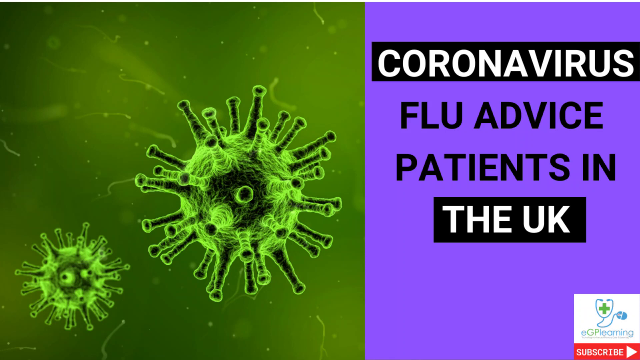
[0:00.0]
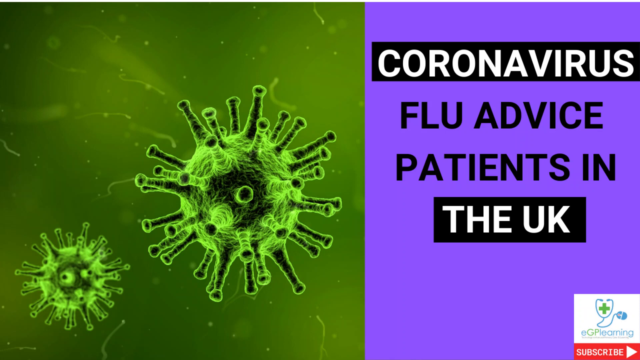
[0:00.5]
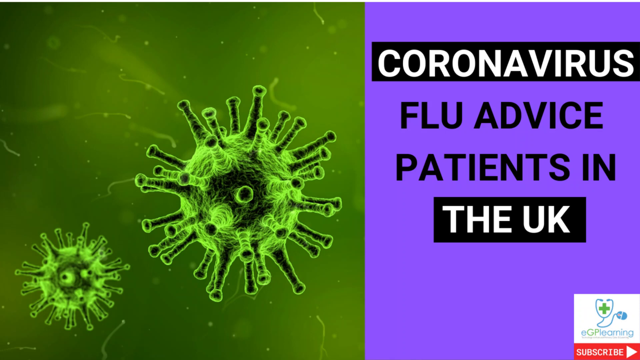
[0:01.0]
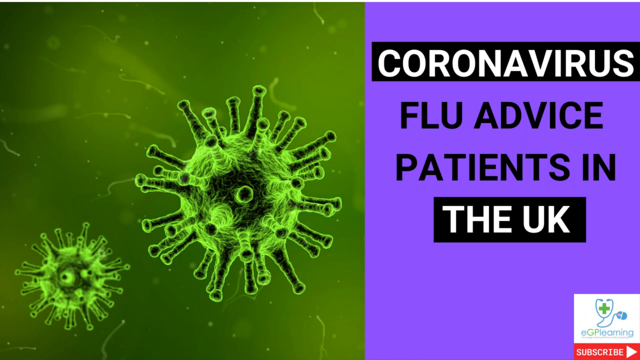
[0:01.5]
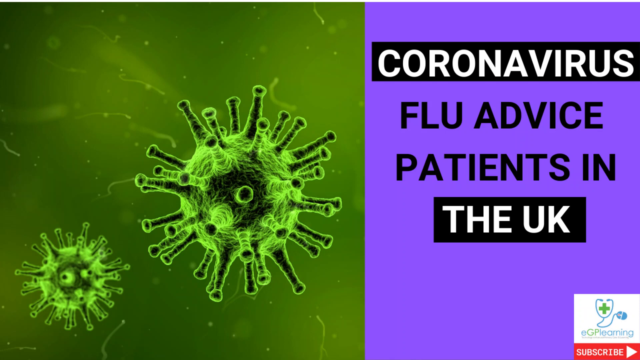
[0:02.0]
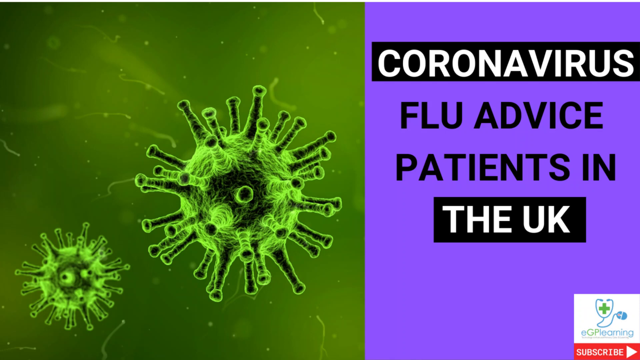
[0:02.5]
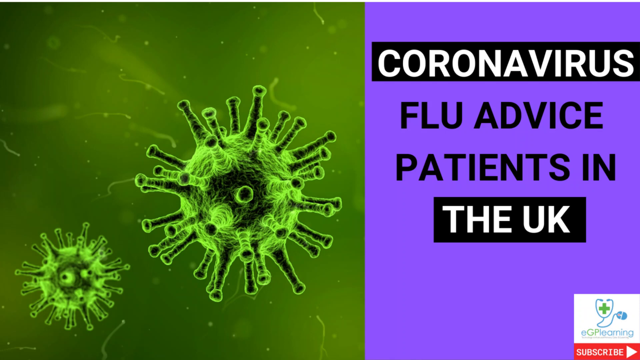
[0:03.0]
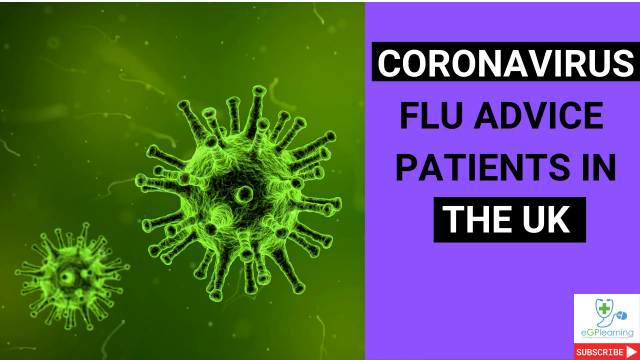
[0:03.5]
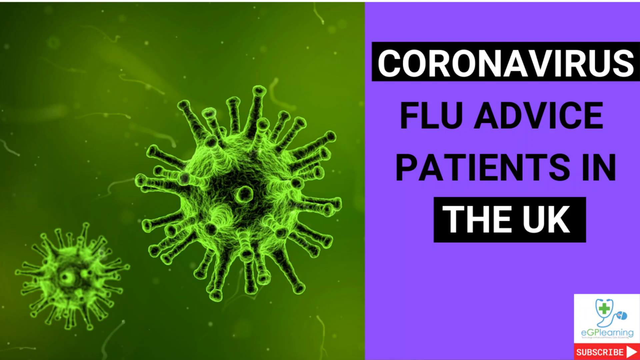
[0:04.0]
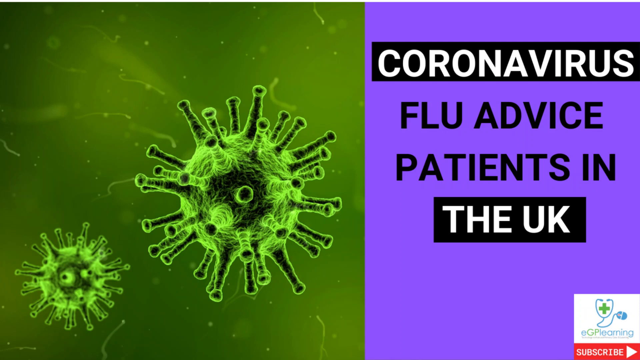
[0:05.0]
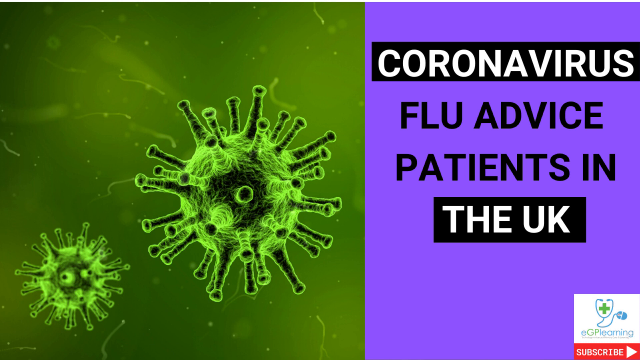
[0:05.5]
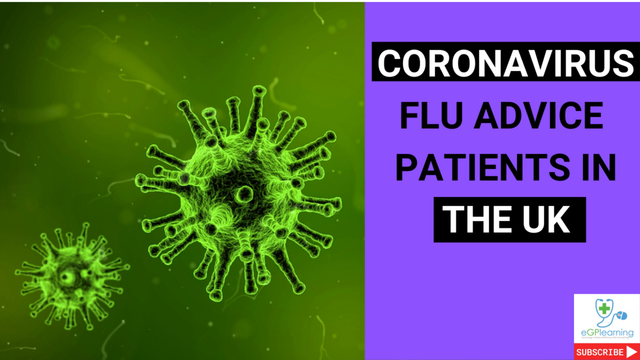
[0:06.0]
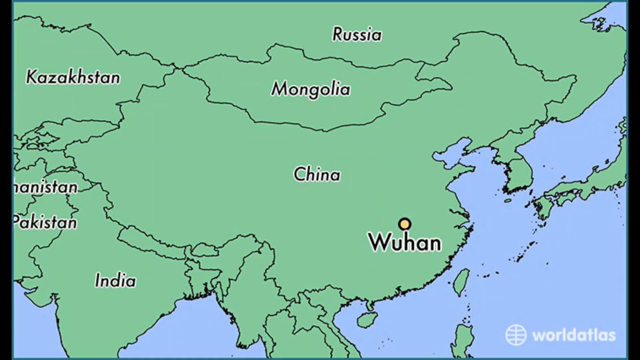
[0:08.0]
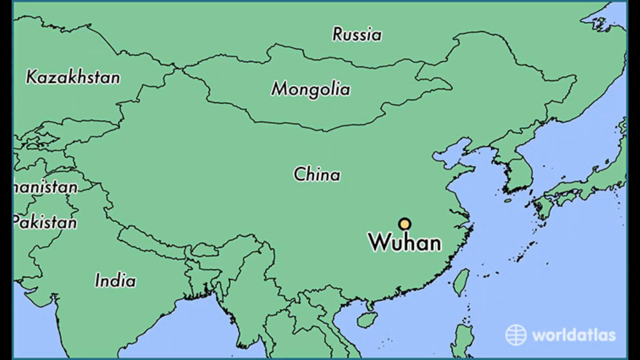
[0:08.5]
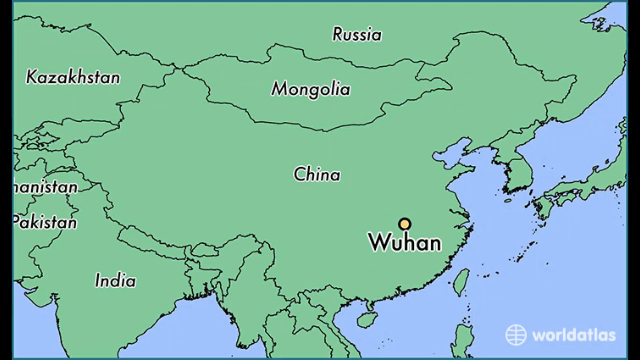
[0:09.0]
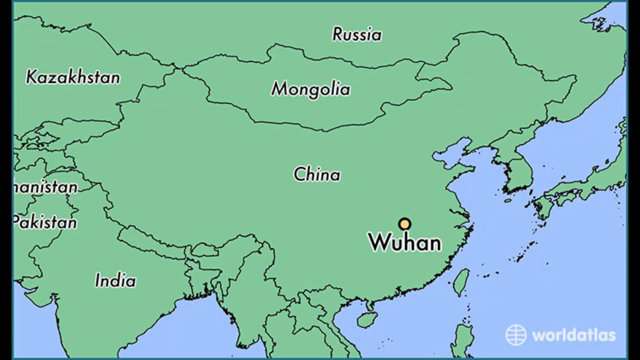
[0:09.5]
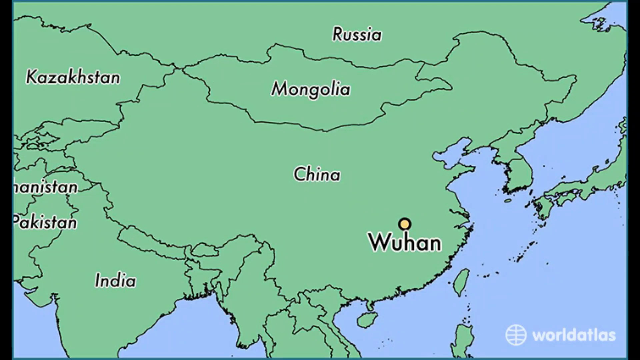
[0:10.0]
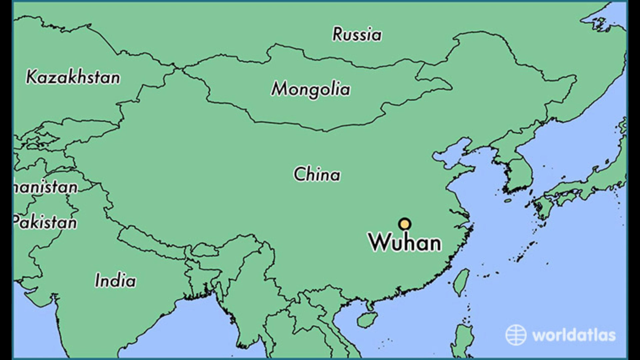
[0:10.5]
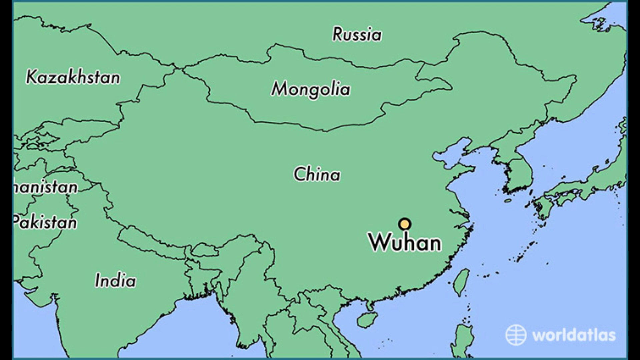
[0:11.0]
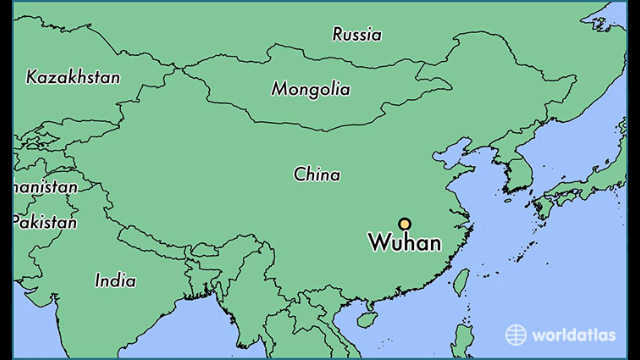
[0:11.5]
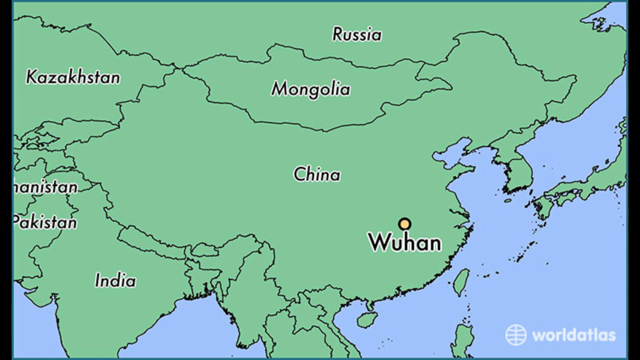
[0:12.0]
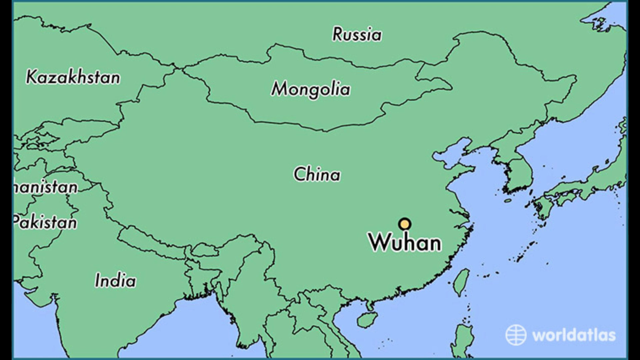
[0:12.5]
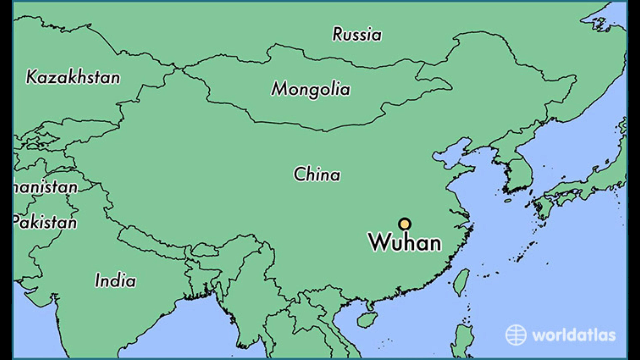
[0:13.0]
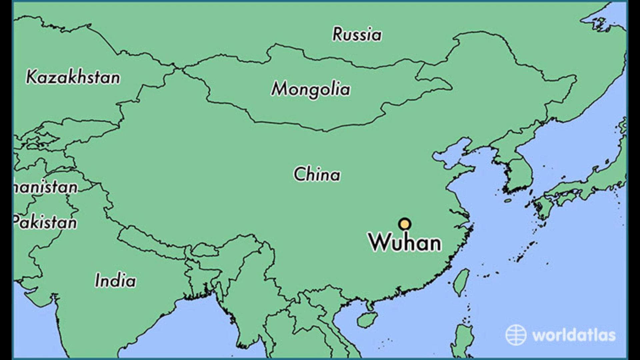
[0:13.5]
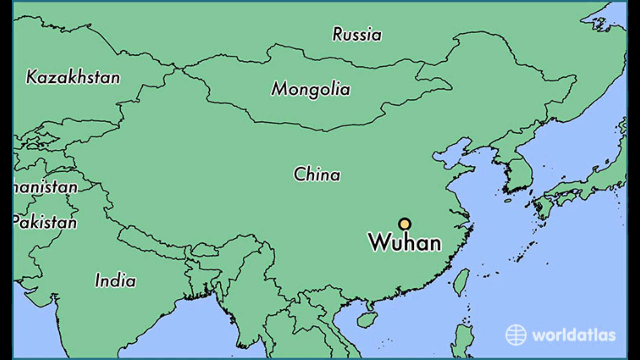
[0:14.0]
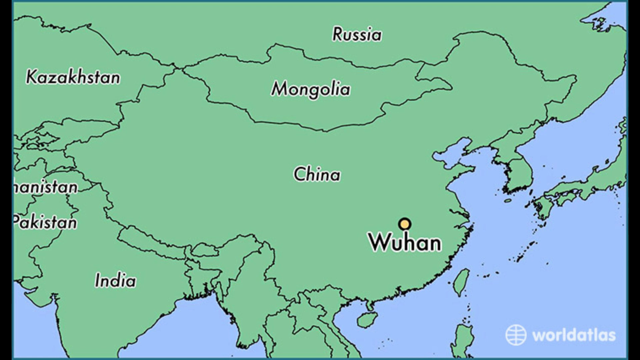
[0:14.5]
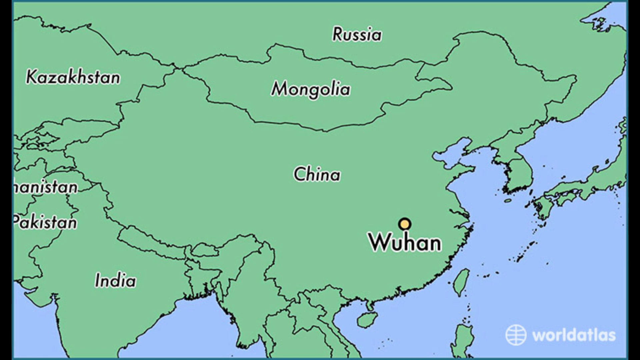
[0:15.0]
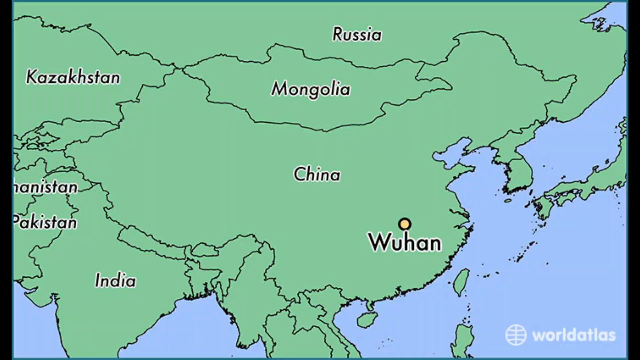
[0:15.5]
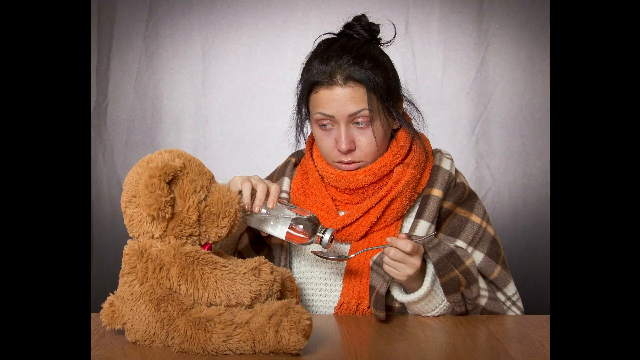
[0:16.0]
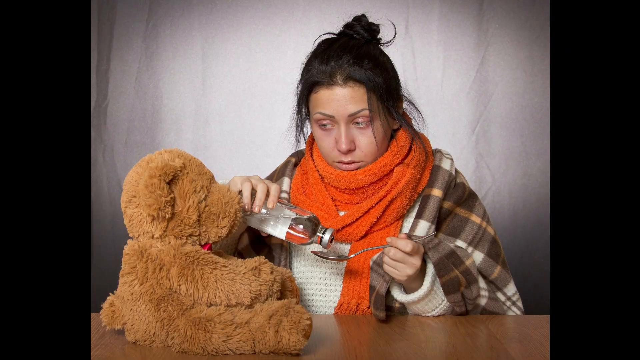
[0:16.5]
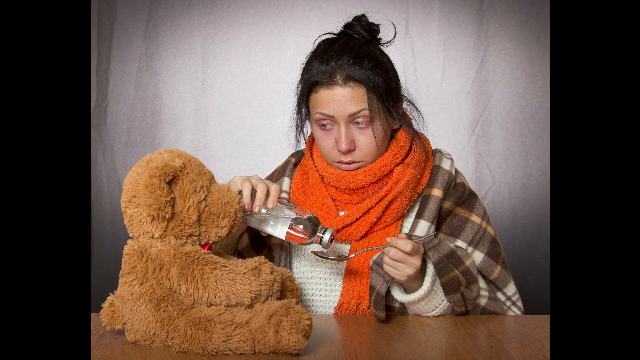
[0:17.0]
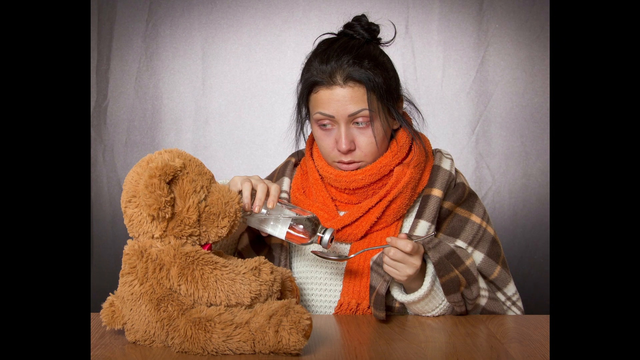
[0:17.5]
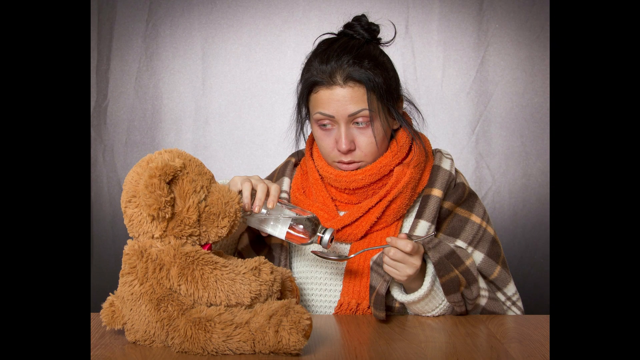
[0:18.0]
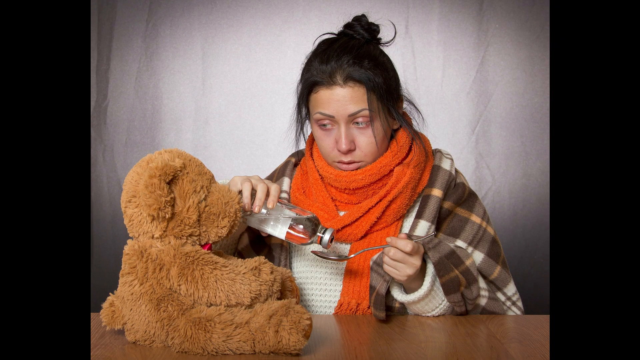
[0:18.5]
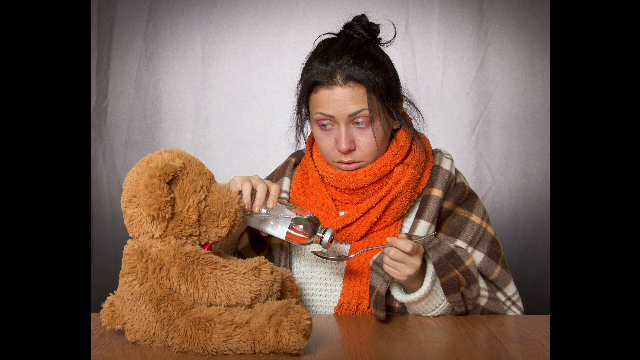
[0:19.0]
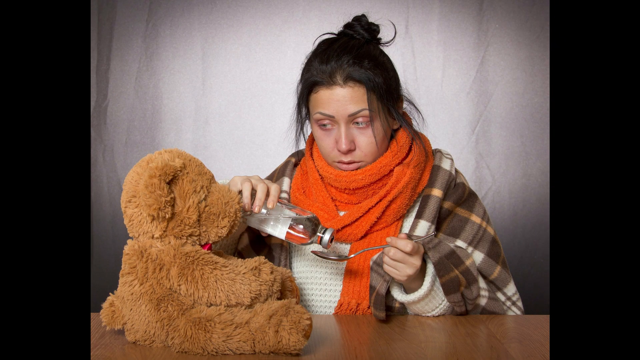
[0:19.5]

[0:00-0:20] A slide about the coronavirus appears, with text that includes "coronavirus" and "patients in the UK." Two green spores are shown on a green background, one really big and one really small, the spore kind of just sitting there. A map follows, showing Russia, Mongolia, Kazakhstan, China, India, Pakistan, and Wuhan, with a circle right above Wuhan. The map is all green, but the outlines of the other countries are visible. Next comes a picture of a Caucasian woman who looks maybe in her early 20s. She has a blanket over her and a scarf that looks orange, and her black hair is pulled back. She seems to be pouring some type of cough syrup into a spoon. There is a brown teddy bear with a bow tie, and she looks like she is going to give the teddy bear some type of medicine. She looks like the one who is kind of sick.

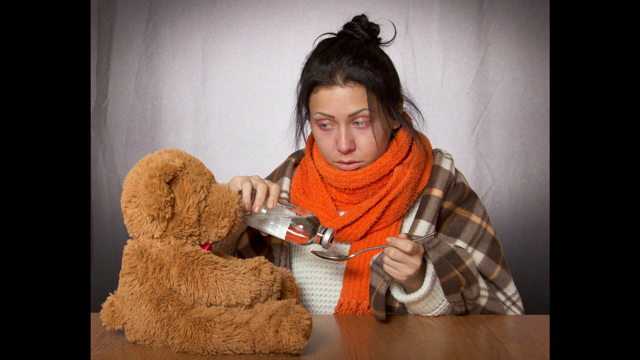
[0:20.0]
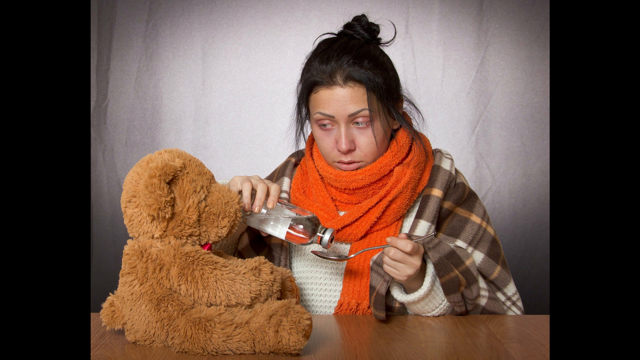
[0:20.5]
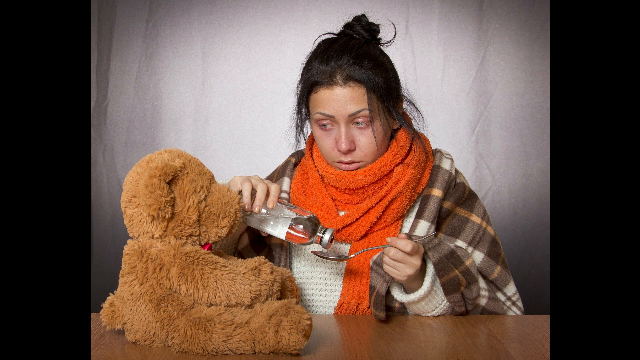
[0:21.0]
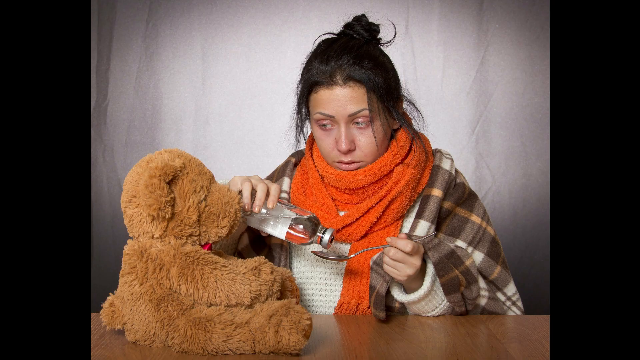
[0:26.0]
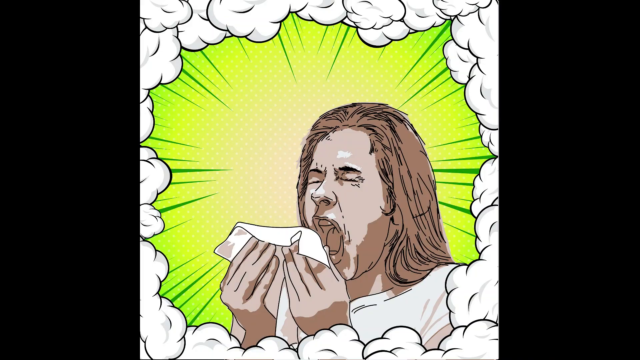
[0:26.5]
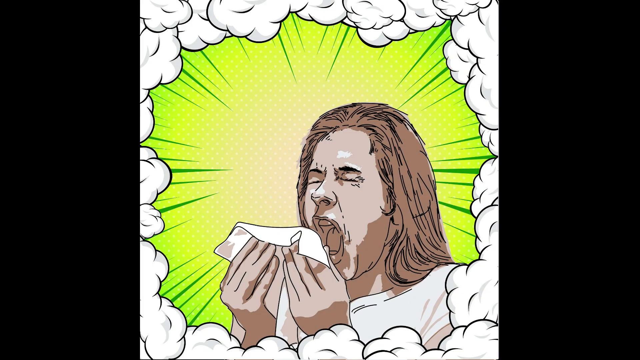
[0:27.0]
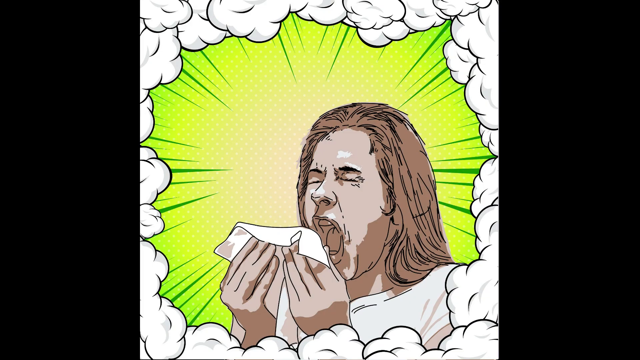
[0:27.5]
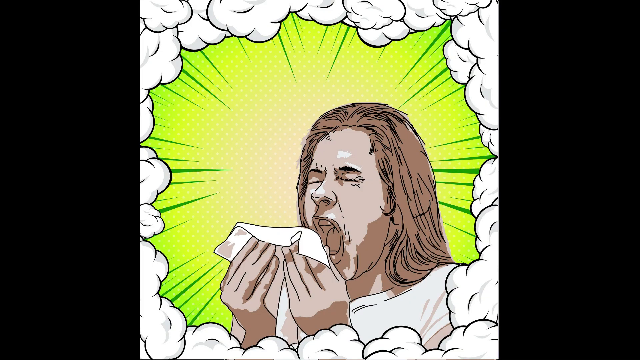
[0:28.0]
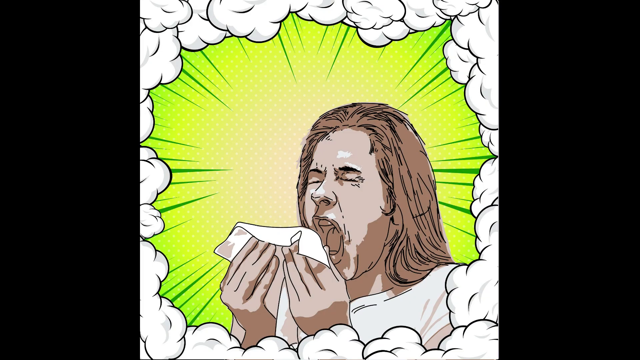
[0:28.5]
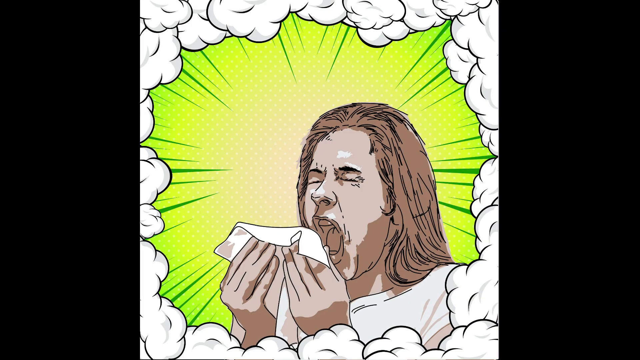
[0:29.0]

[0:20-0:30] A woman on the slide looks sick. Her hair is kind of pulled back, she looks to be maybe in her 20s, and she is Caucasian. She has a scarf wrapped around her neck at least three times, what looks like a blanket on, and an all-white long-sleeve shirt. She is pouring cough syrup into a spoon, and a brown teddy bear with a red bow tie is on the table; she looks like she is about to give it some type of medicine. Then a cartoonish image of what looks like a woman sneezing appears. The background is green, with something like an explosion behind her as if she is coughing, and puffs of smoke all around her. She holds a tissue in both hands with her mouth wide open, as if coughing or sneezing. Both eyes are closed, and she has long hair down to her shoulders.